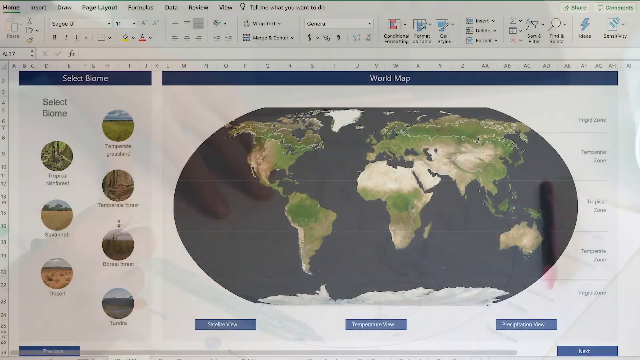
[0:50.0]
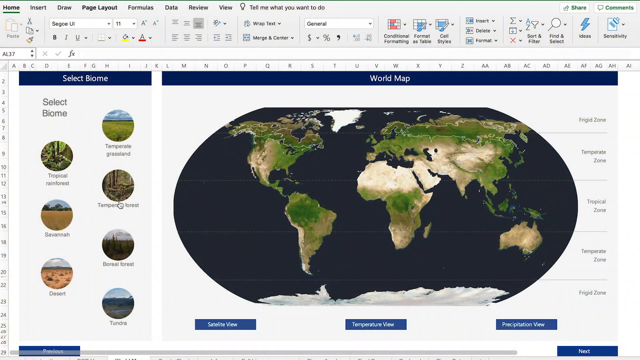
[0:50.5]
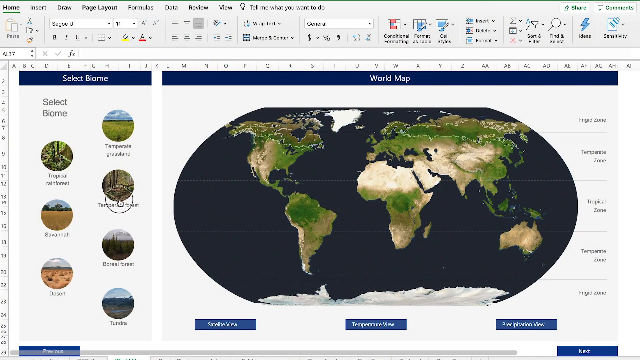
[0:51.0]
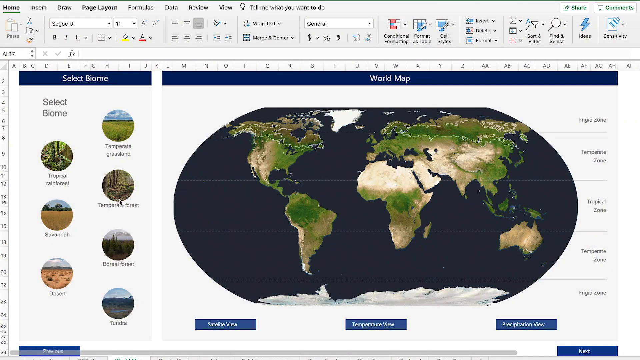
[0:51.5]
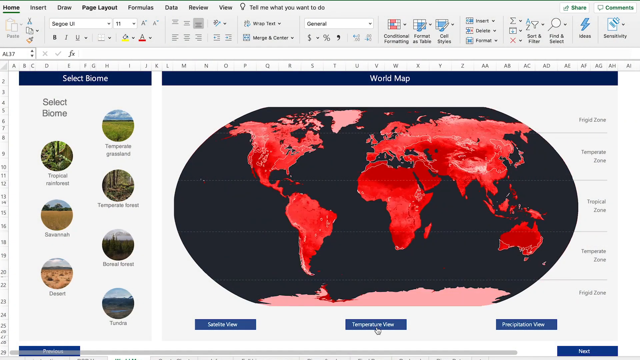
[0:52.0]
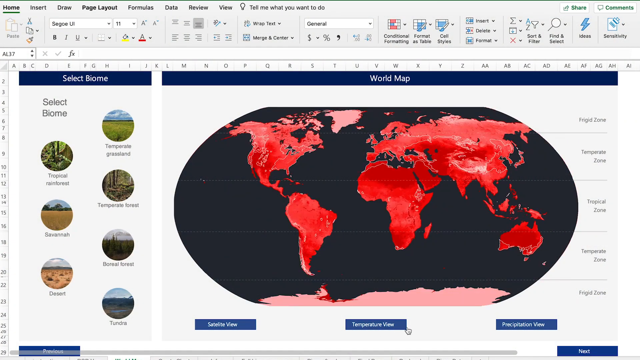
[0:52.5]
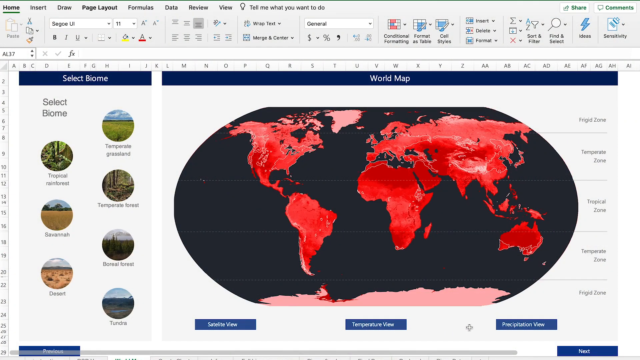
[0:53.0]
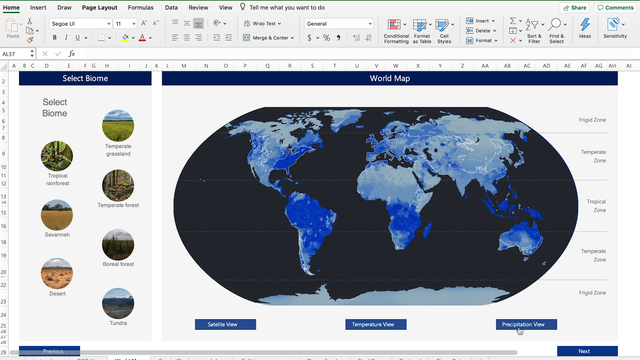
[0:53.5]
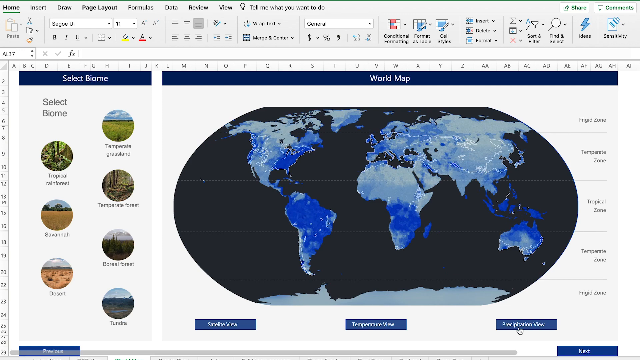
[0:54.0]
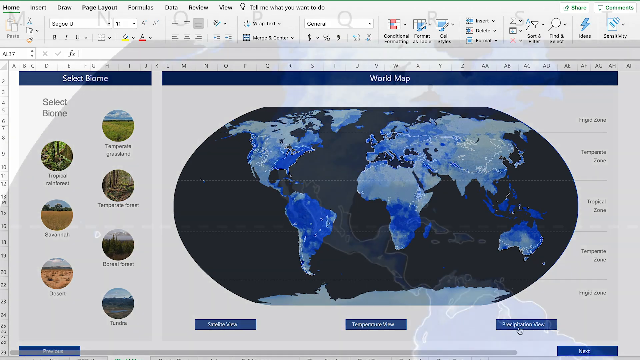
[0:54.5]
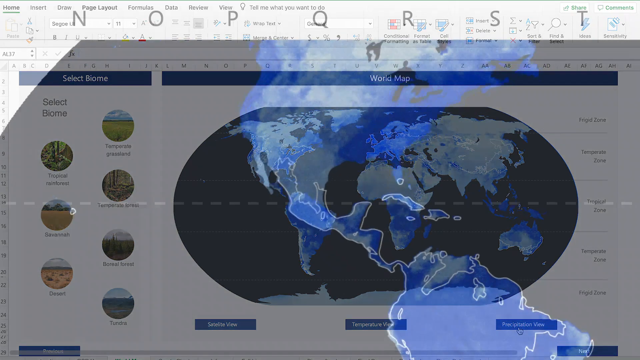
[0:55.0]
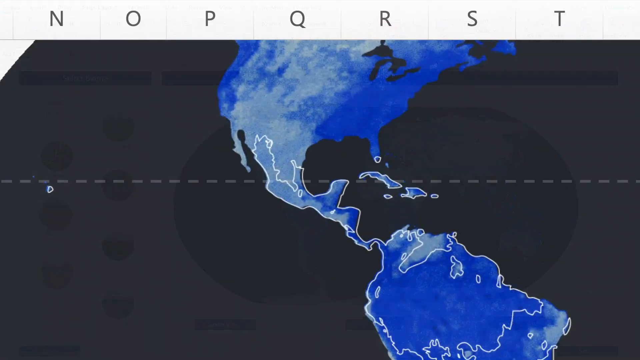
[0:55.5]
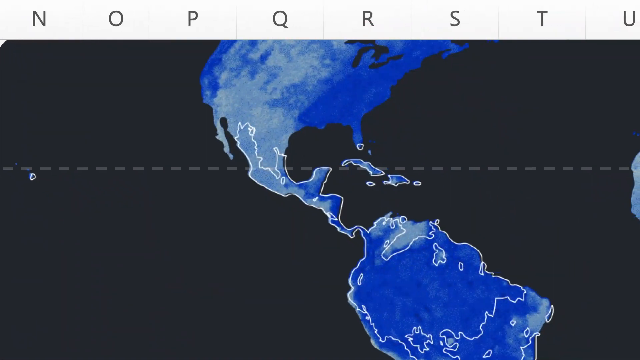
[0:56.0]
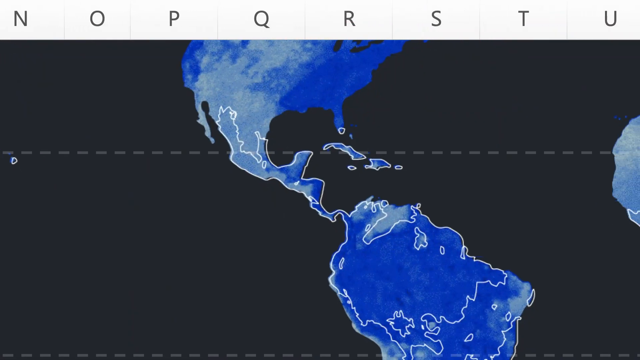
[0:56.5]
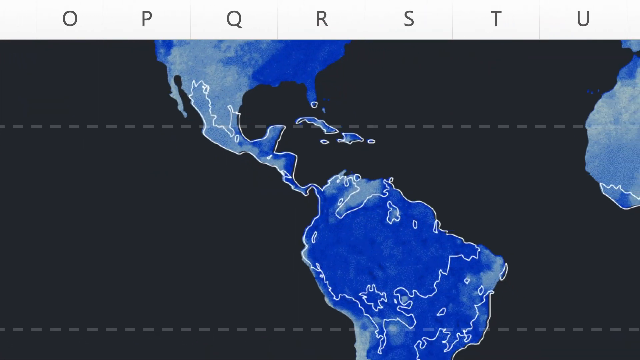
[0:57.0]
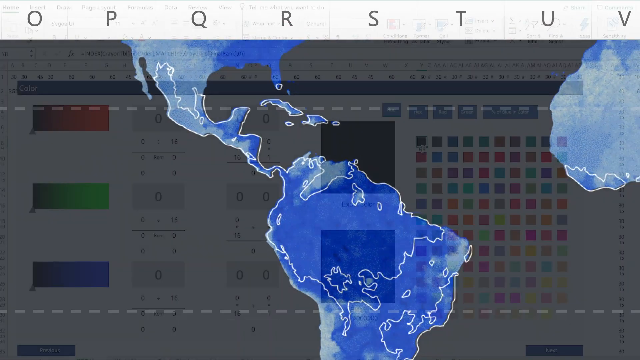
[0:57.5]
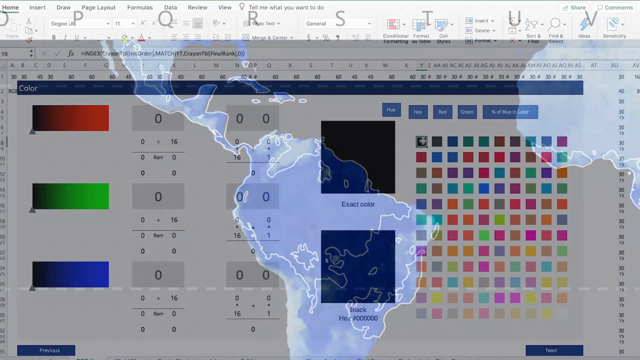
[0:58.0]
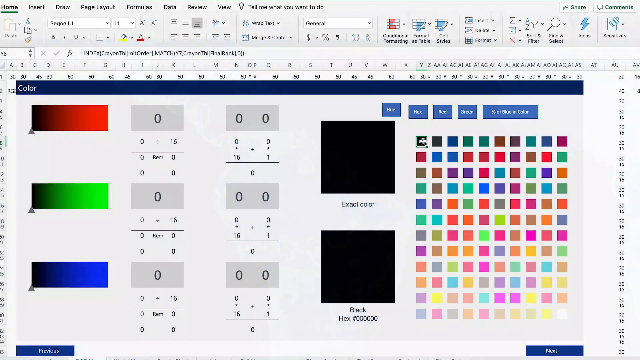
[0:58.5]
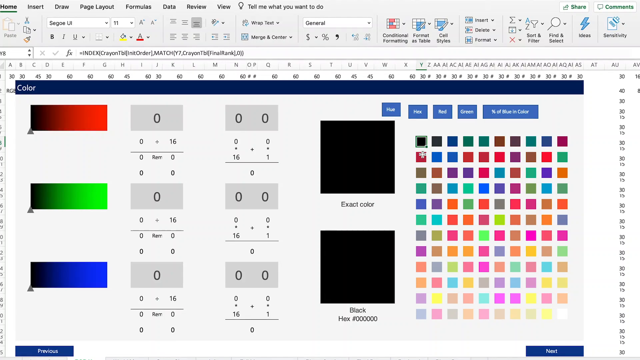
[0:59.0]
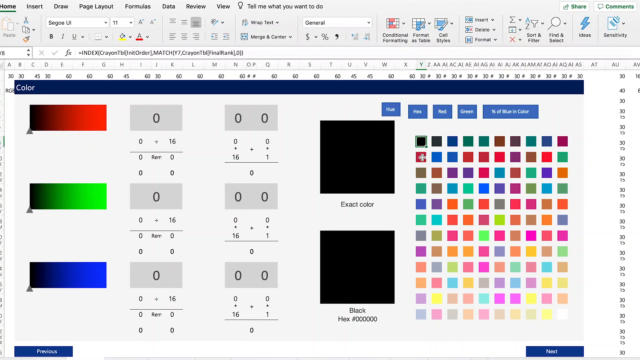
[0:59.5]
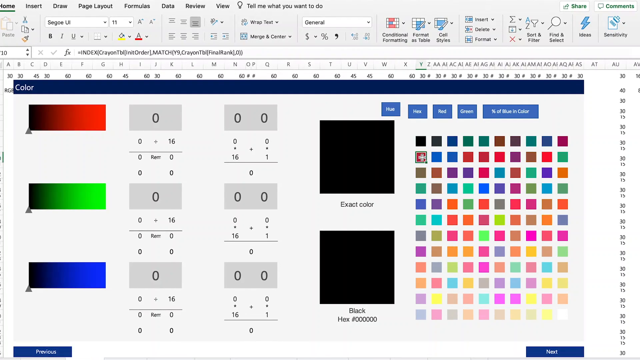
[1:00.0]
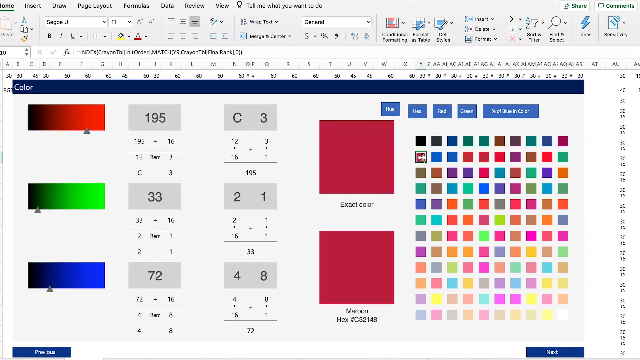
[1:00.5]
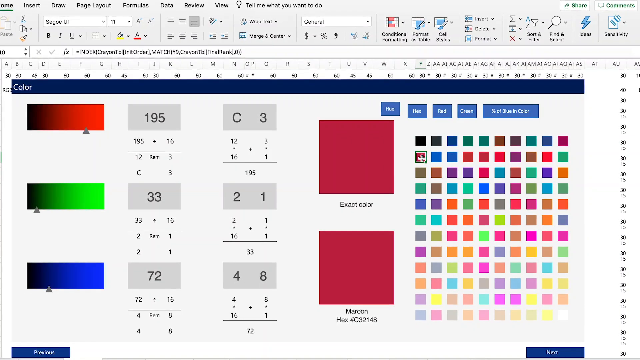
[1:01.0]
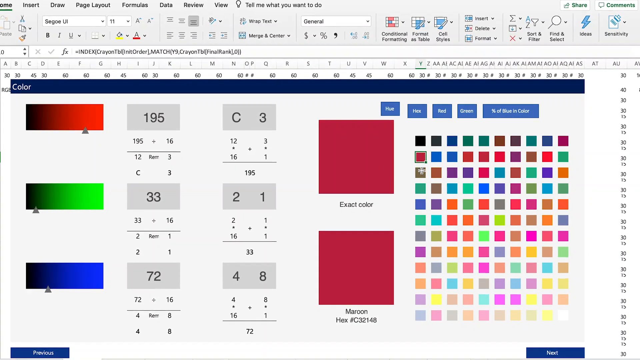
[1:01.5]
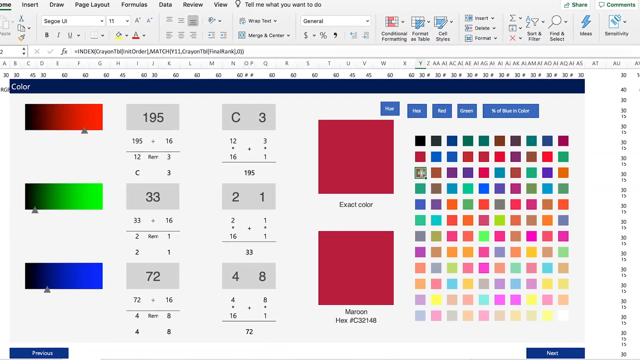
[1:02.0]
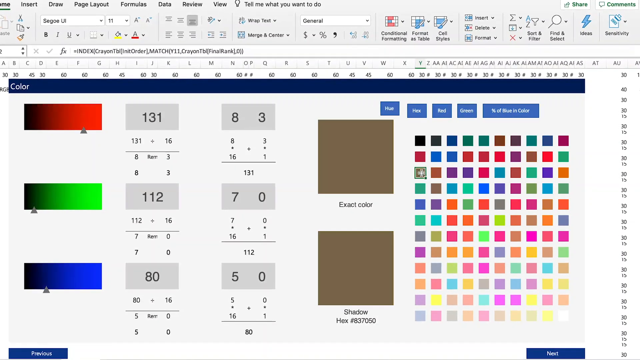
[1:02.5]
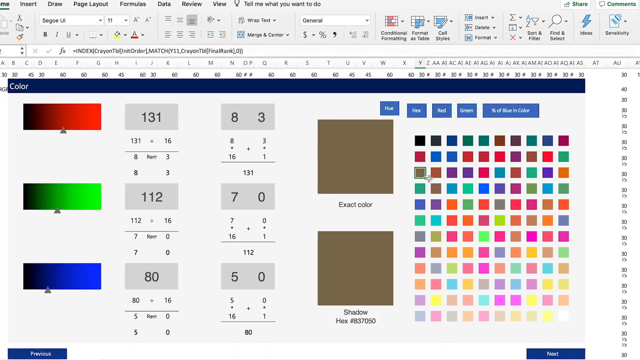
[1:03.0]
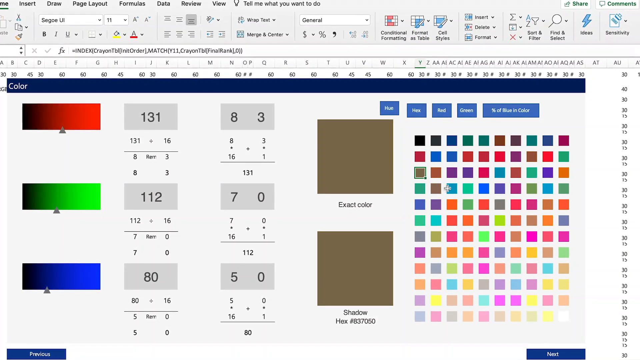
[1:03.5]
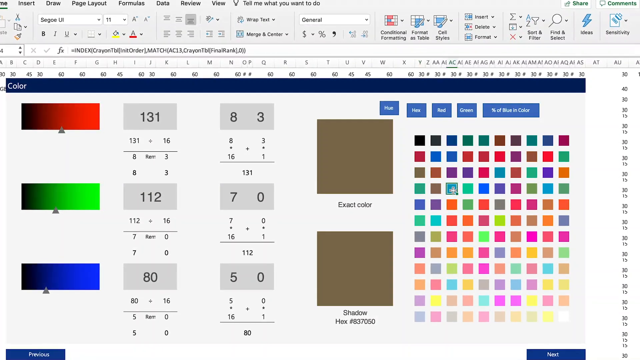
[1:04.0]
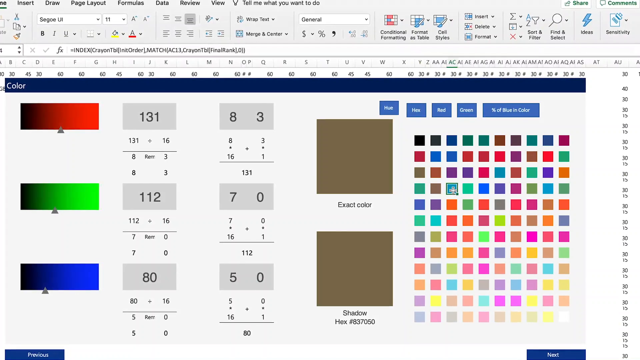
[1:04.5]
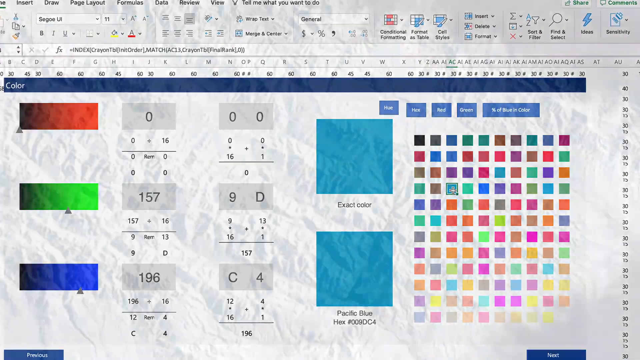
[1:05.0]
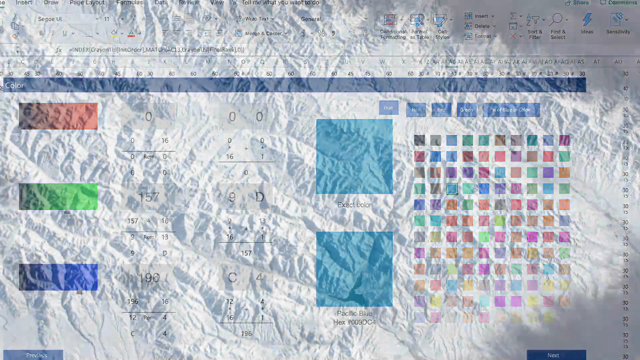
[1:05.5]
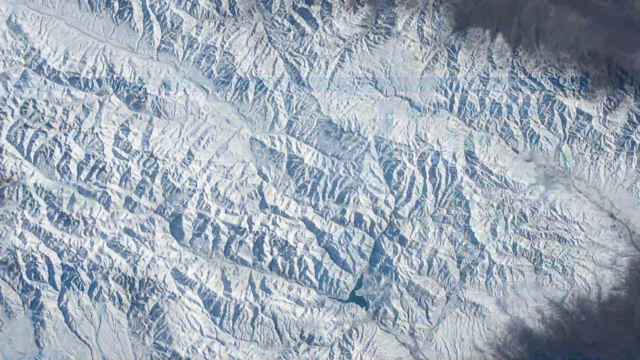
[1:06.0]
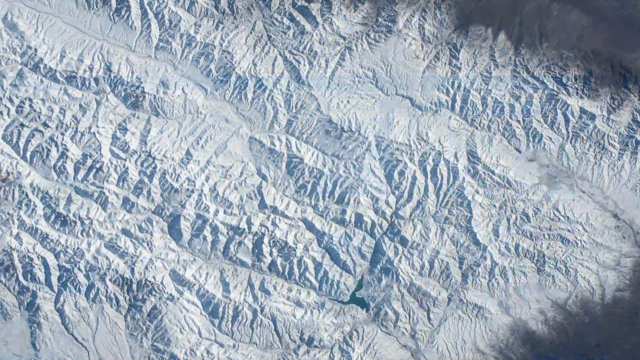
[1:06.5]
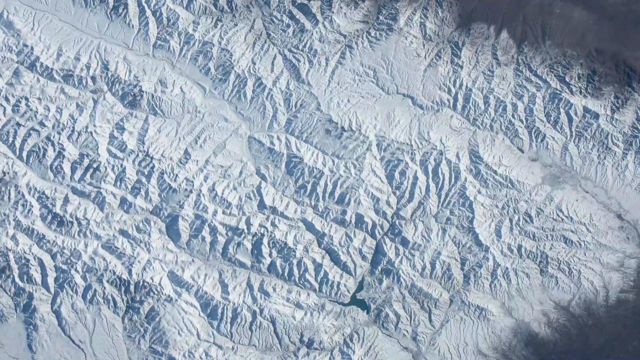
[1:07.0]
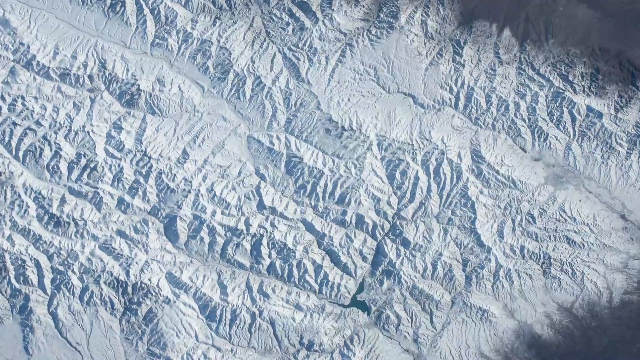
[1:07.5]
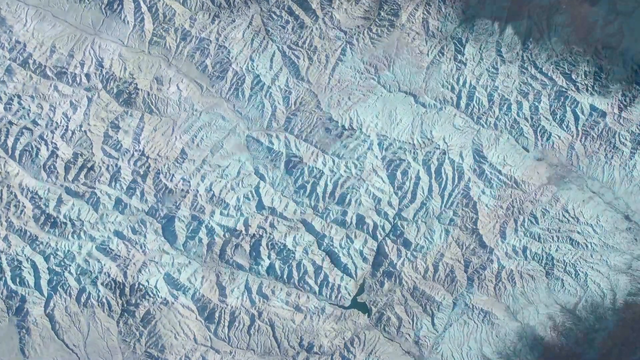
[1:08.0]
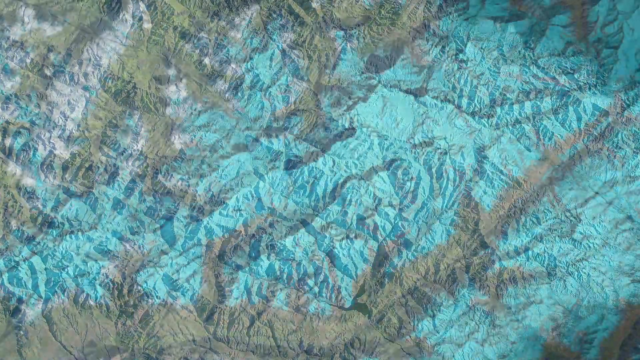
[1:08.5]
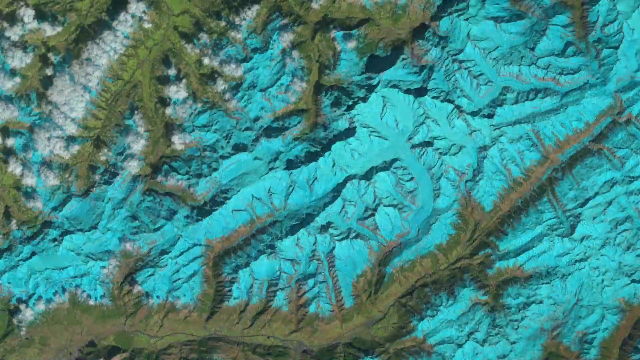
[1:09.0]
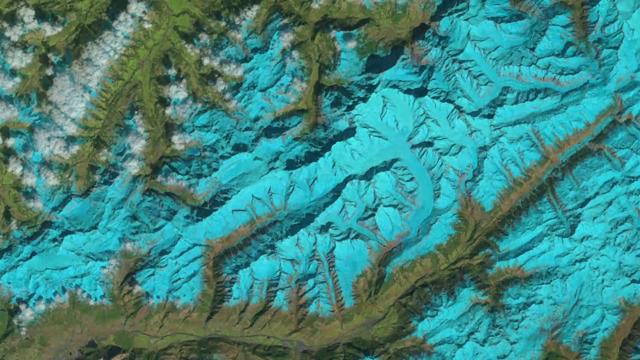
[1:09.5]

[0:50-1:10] A map of the world shows the seven continents, with green for the polar ice caps, displayed as it would be on a computer with different computer imagery. Someone appears to tap something, possibly labeled "tempered forest", and everything changes to red; they tap something else and it changes to blue, all outlined. The computer keeps changing between red, green and blue. A close-up of ice caps follows, and then the ice caps are shown in blue and green. The computer model seems to be working with different temperatures.